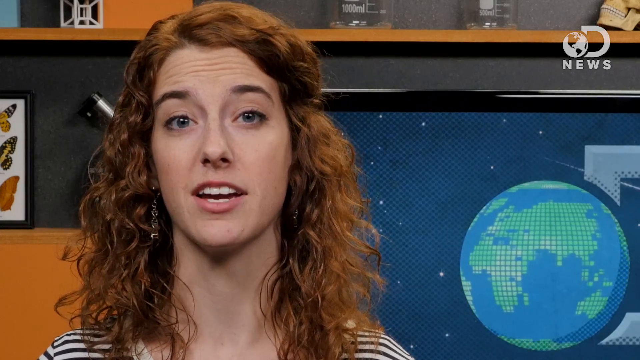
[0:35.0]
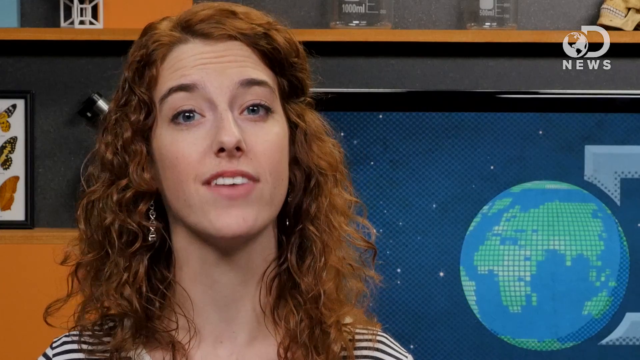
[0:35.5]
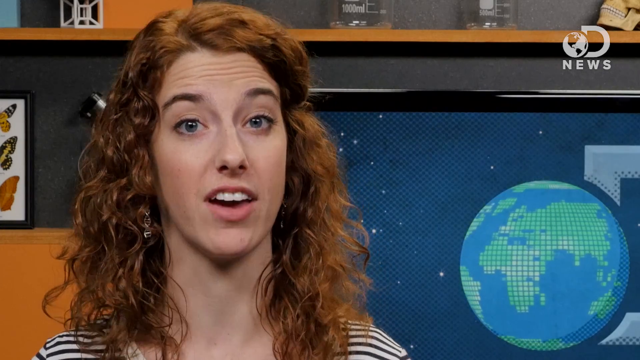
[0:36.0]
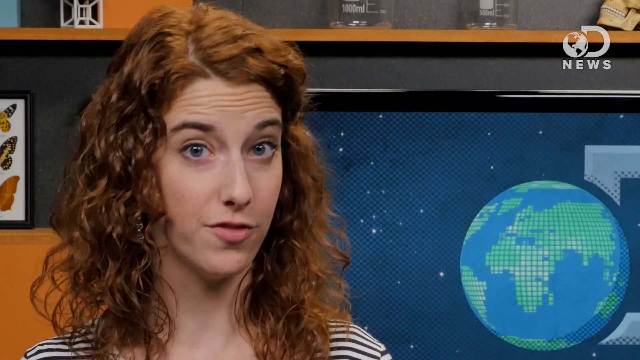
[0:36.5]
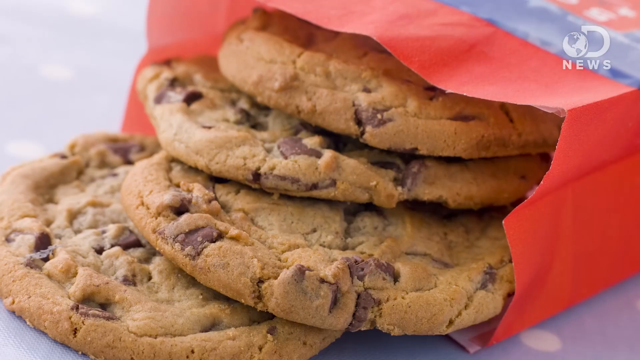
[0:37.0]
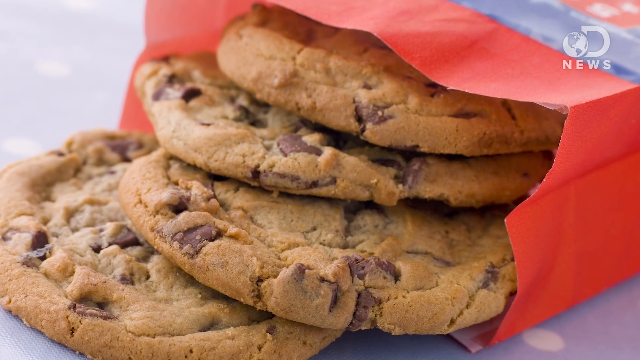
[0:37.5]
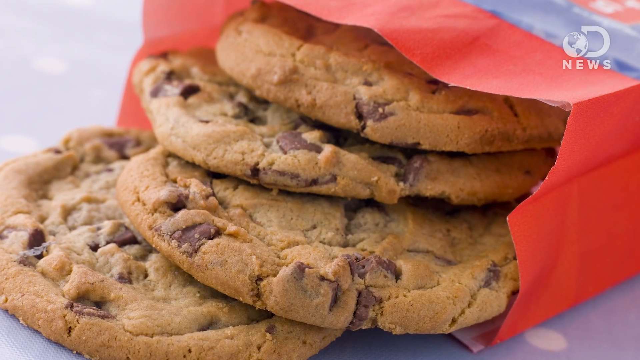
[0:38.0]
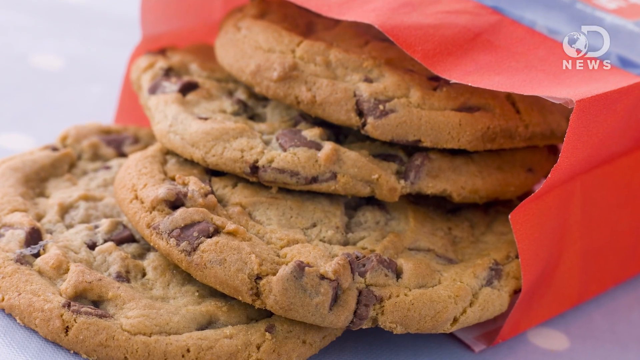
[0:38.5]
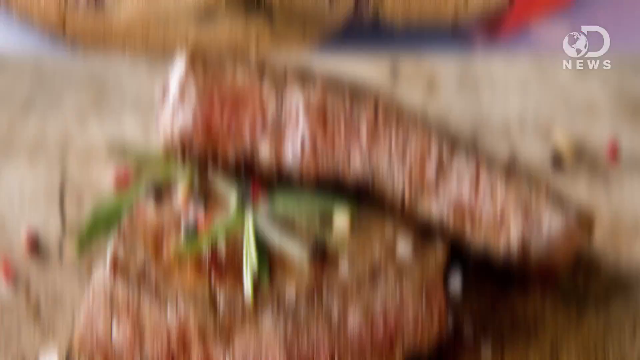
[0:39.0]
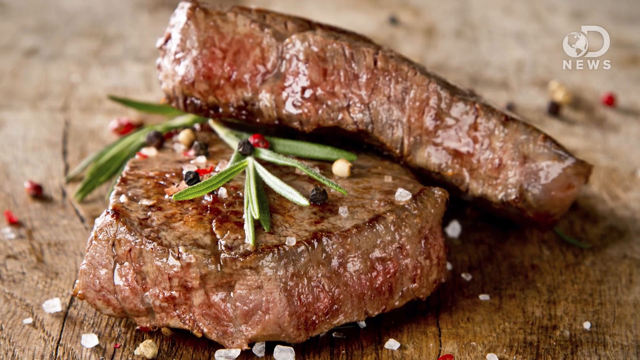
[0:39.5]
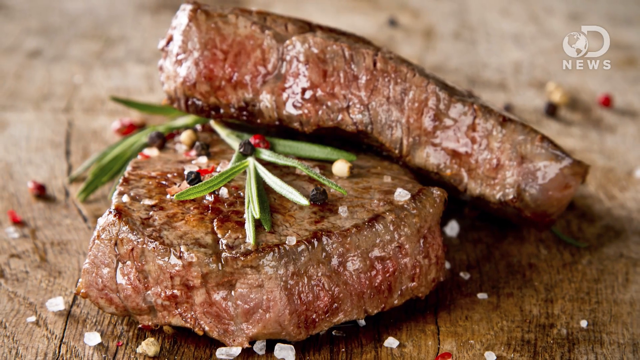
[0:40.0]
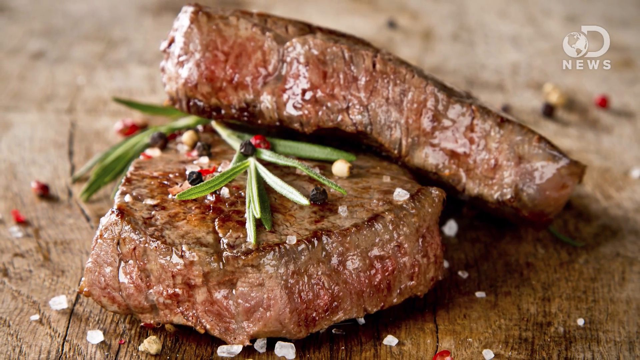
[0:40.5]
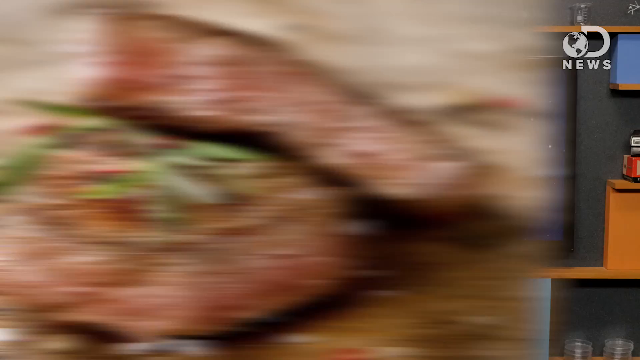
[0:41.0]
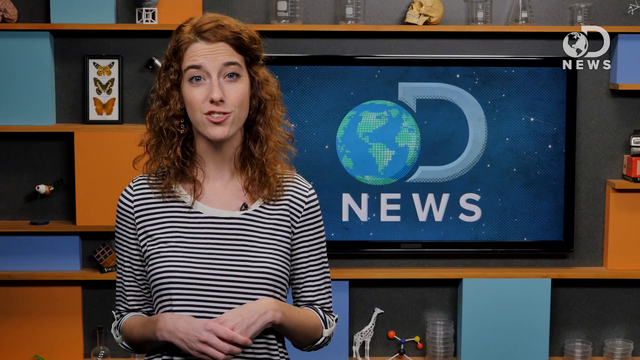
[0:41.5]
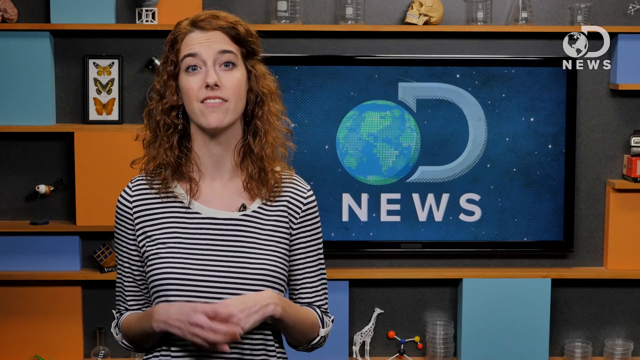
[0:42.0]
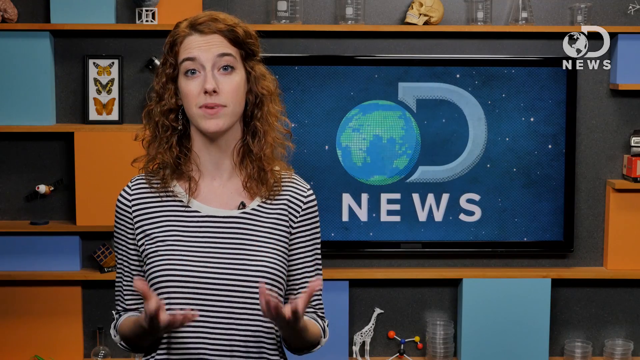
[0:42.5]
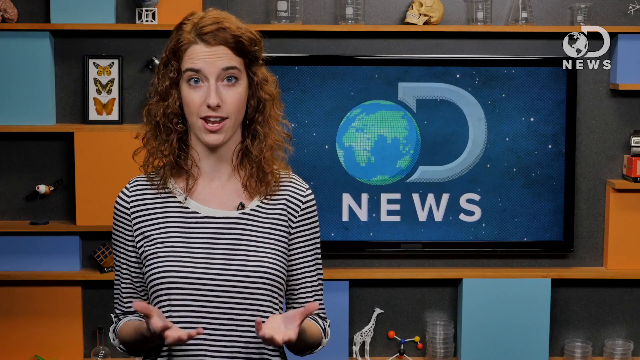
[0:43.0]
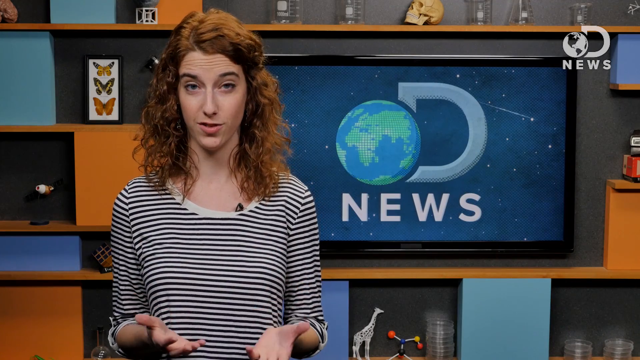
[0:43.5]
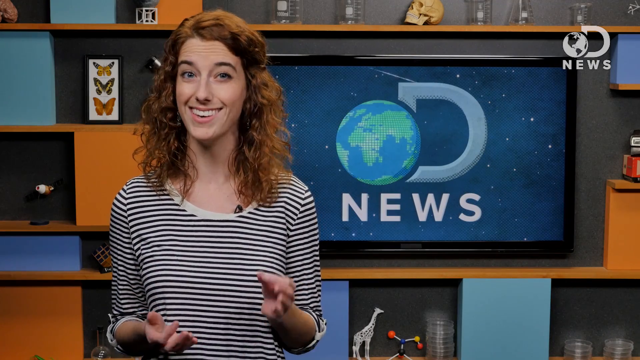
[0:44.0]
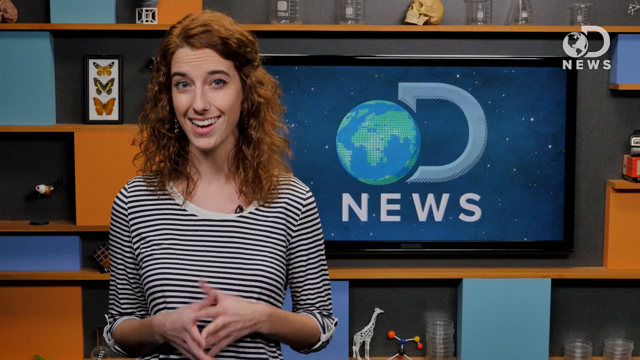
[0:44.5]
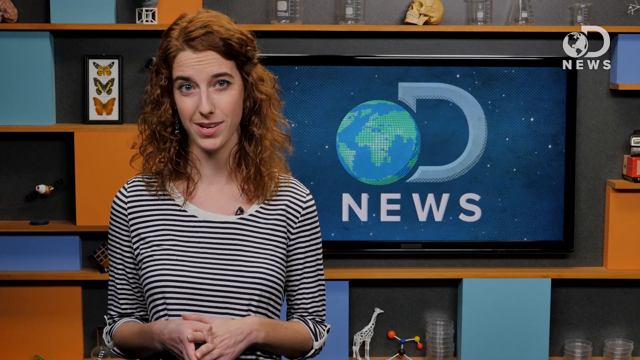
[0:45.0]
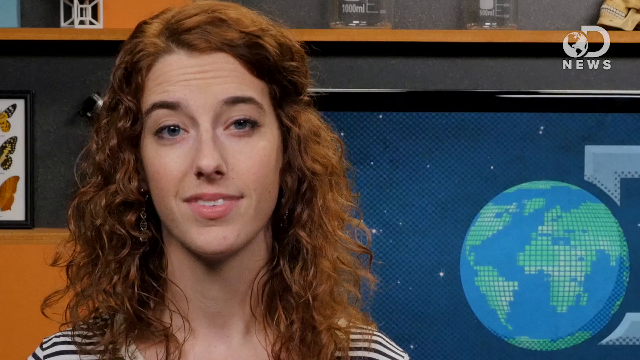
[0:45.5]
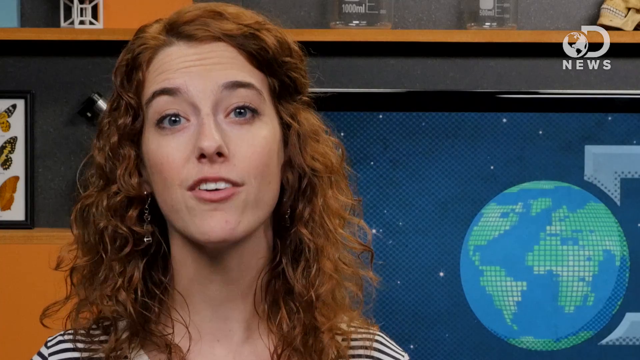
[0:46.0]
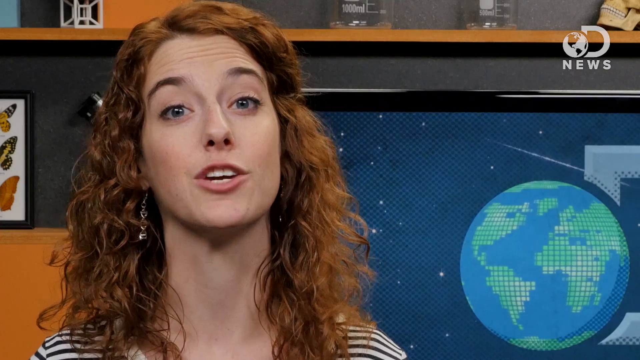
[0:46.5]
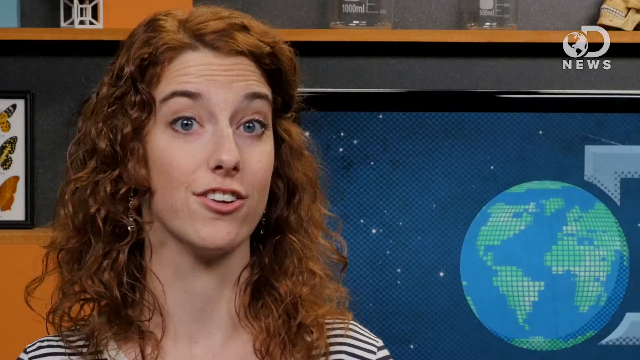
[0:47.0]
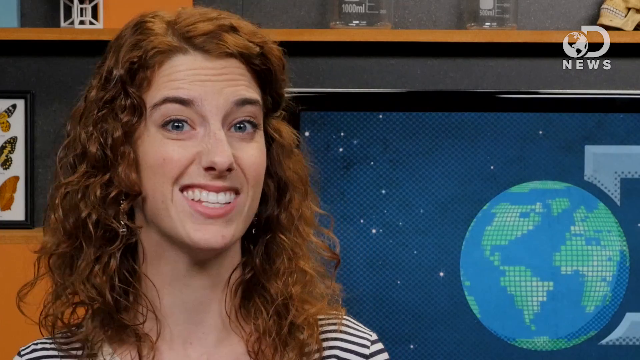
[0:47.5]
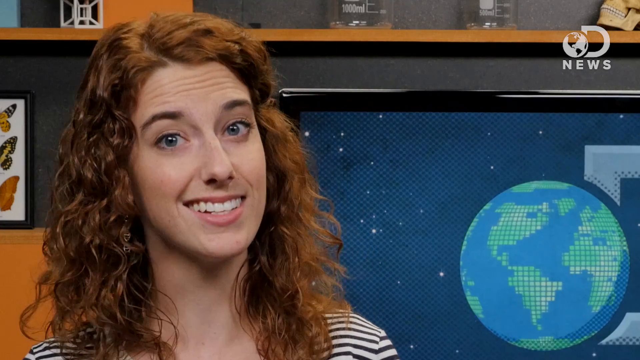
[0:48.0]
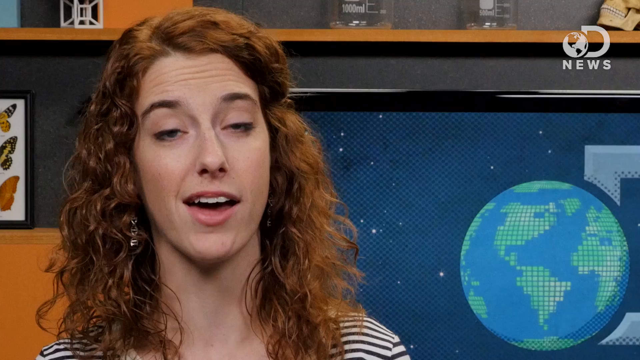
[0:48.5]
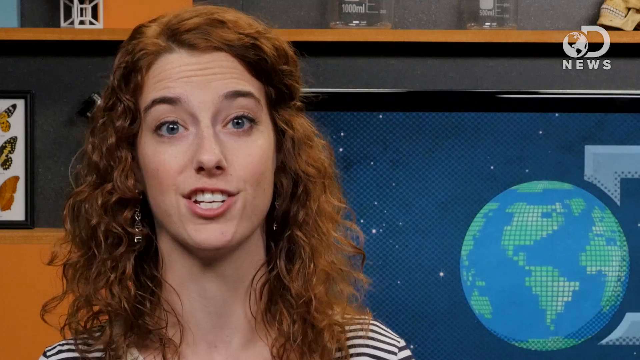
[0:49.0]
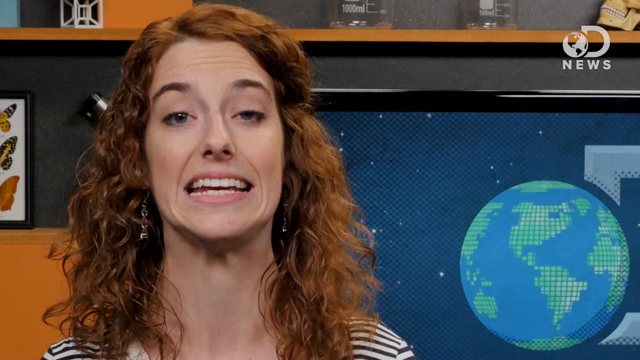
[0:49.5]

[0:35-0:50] A woman is in front of a TV screen showing a logo of a spinning earth, as in a newscast. Shots of chocolate chip cookies, steak and plates appear: four chocolate chip cookies and two pieces of steak topped with rosemary sprigs, grated salt and pepper. The video keeps going back to the cookies and the steak. Then come potatoes, garlic, potatoes boiling, french fries, and a chef sautéing something in a pan that cannot be made out. Celery sticks are labeled 10 calories per stick. Shish kebabs follow with what looks like cucumber, onion and tomato. Then there is a picture of four babies, and someone chops up a cucumber and a red, an orange and a yellow pepper on a cutting board. The video returns to the woman speaking, then shows somebody in a grocery store looking at a package of yogurt, then returns to the woman. A man, Trace, talks, with text reading "spaced out with NASA."